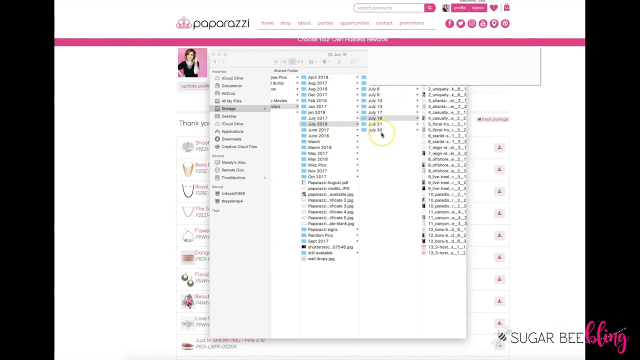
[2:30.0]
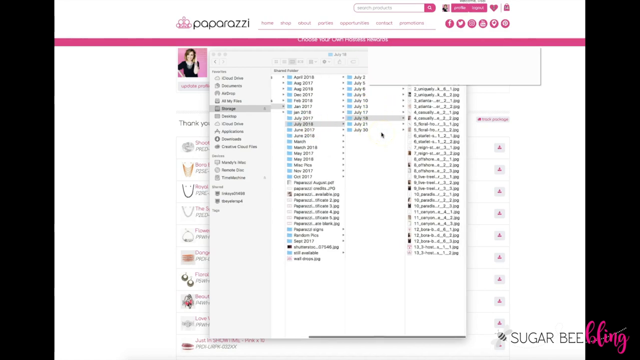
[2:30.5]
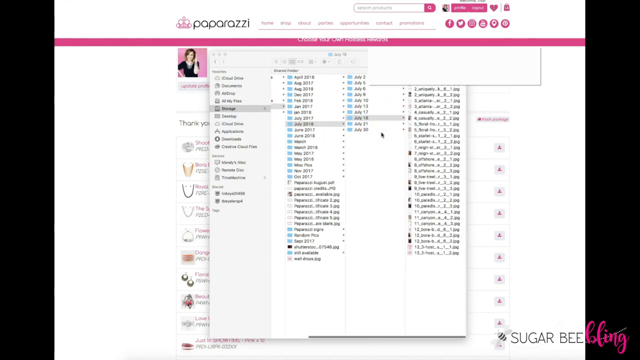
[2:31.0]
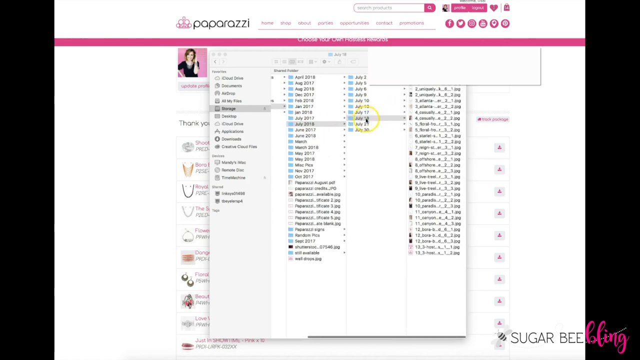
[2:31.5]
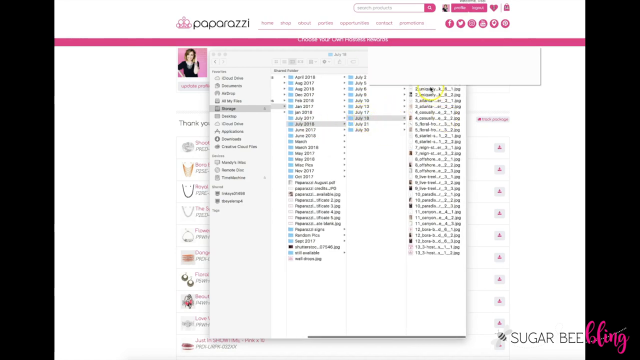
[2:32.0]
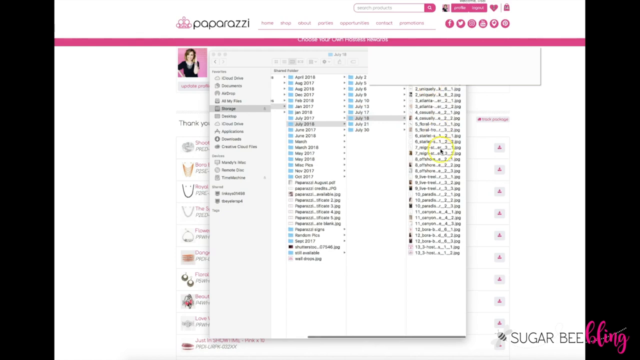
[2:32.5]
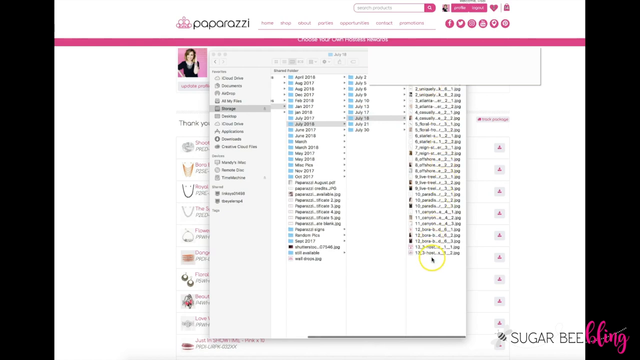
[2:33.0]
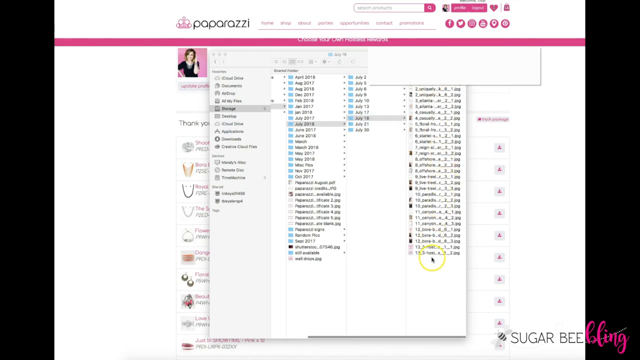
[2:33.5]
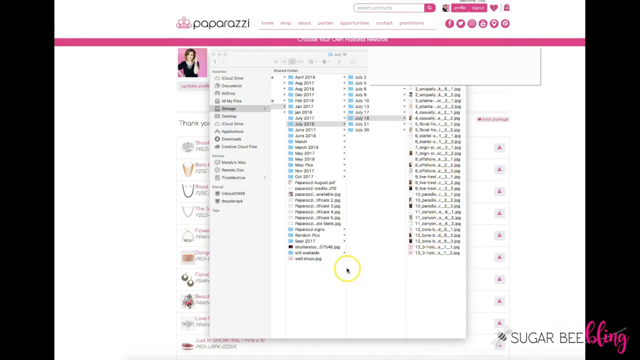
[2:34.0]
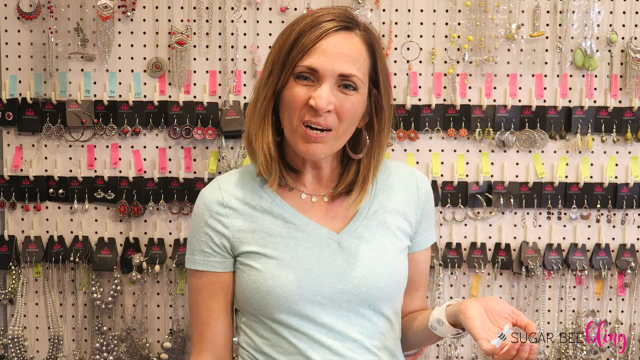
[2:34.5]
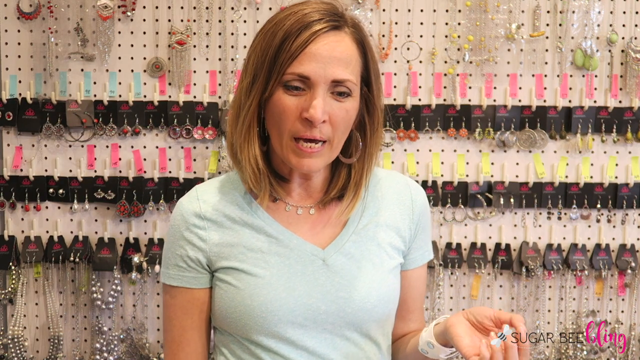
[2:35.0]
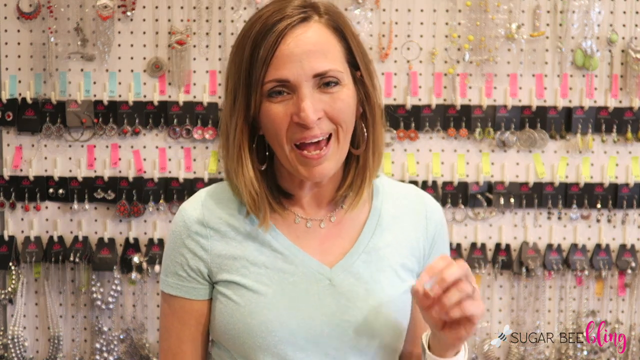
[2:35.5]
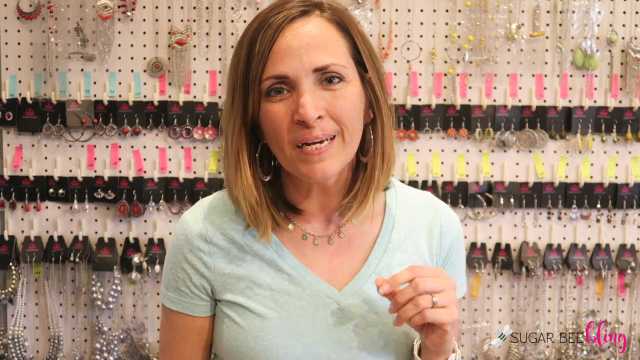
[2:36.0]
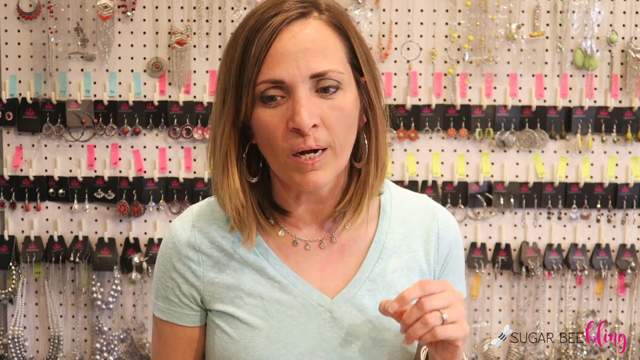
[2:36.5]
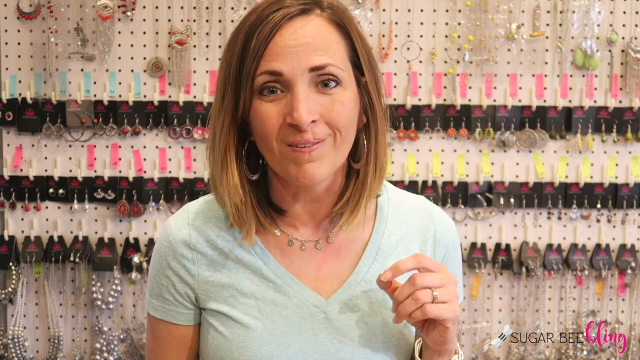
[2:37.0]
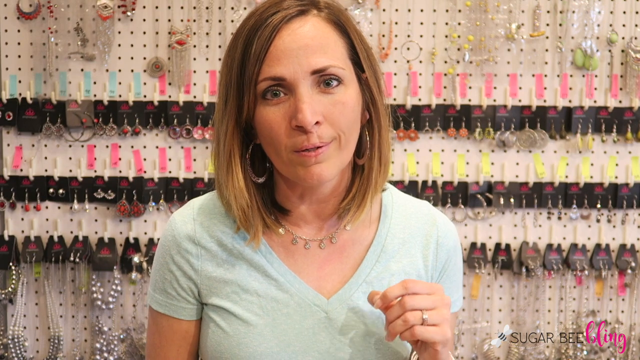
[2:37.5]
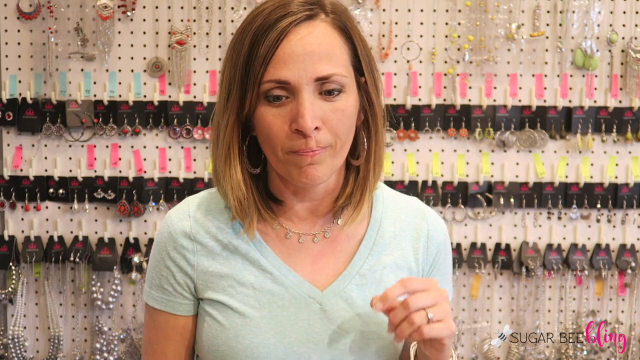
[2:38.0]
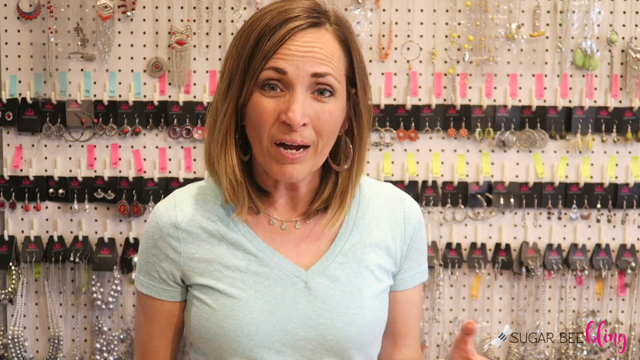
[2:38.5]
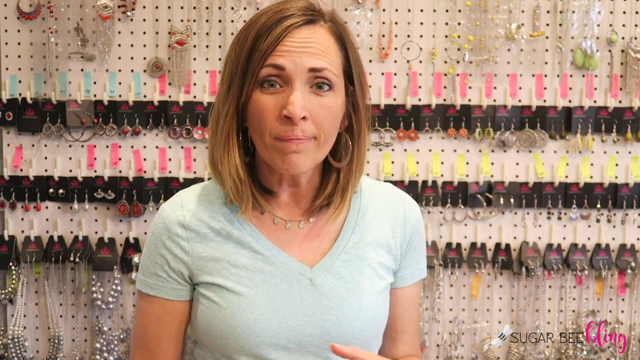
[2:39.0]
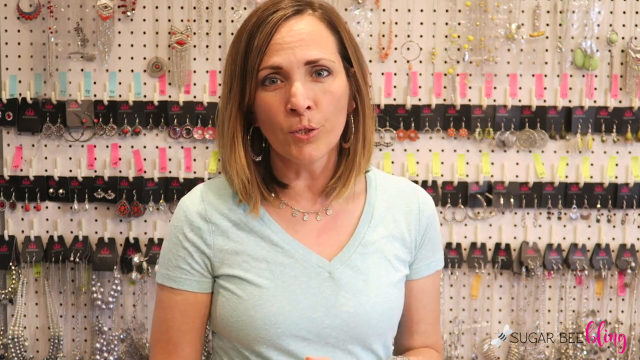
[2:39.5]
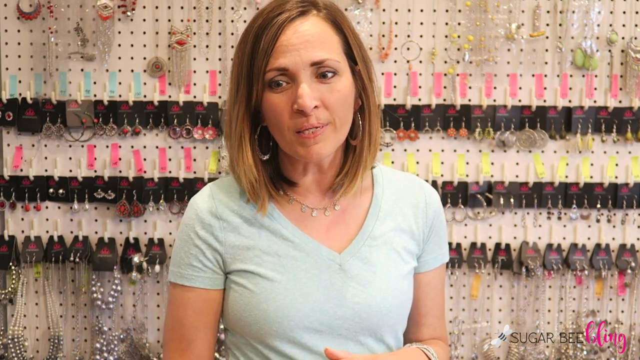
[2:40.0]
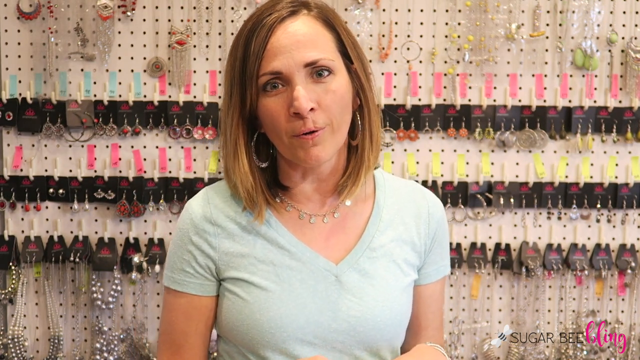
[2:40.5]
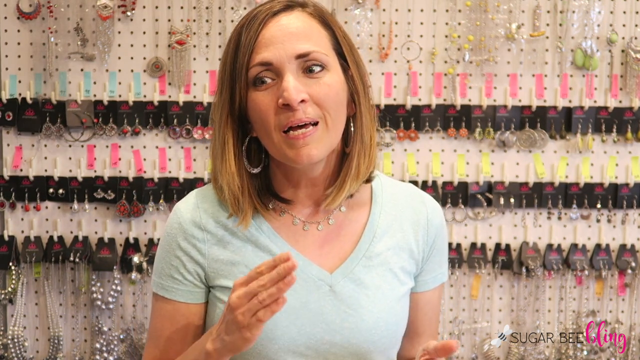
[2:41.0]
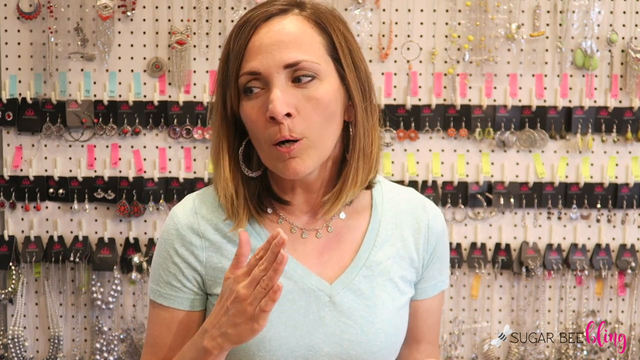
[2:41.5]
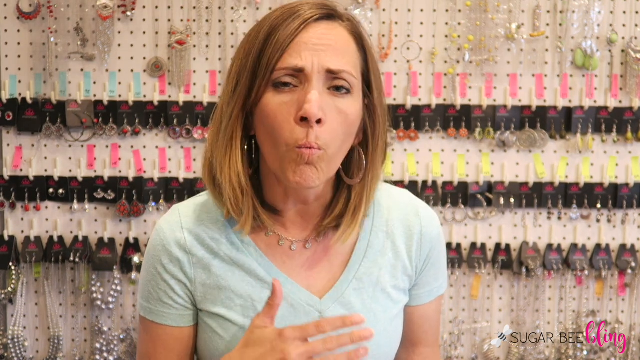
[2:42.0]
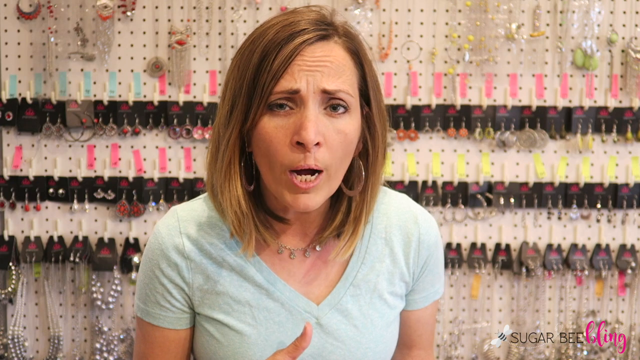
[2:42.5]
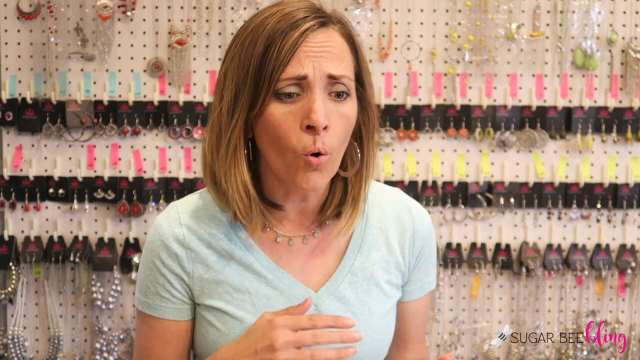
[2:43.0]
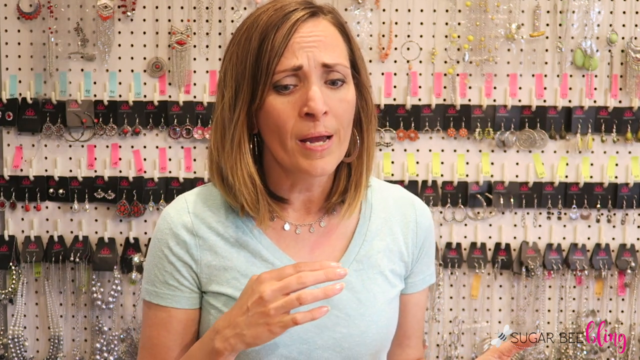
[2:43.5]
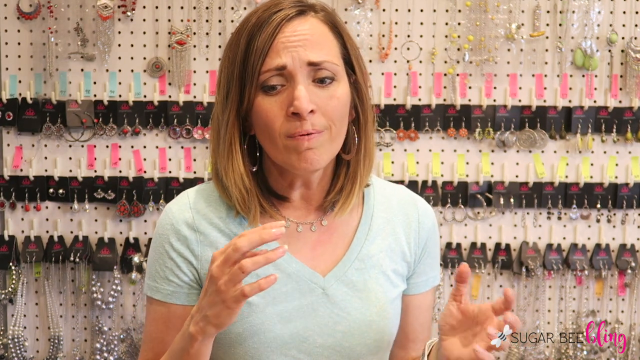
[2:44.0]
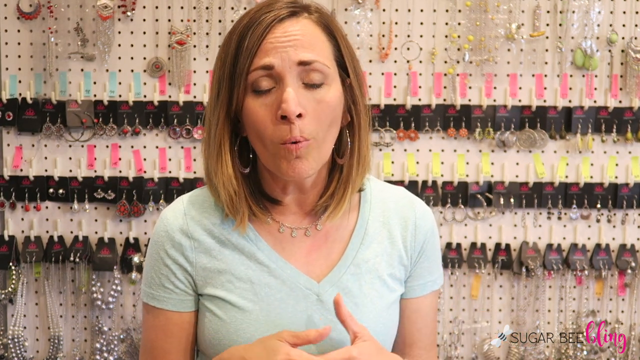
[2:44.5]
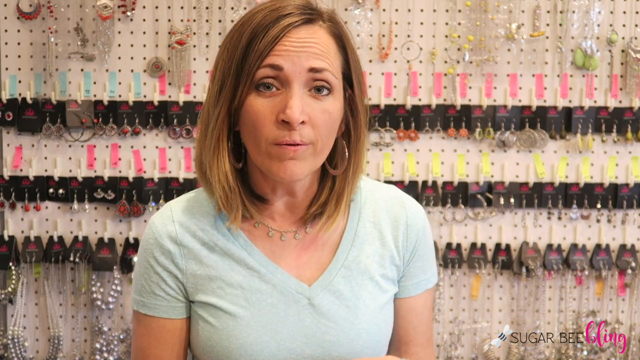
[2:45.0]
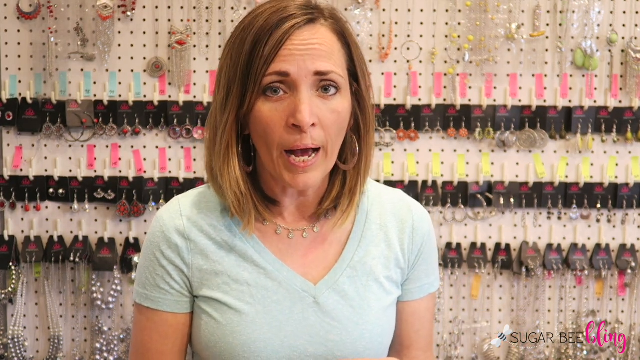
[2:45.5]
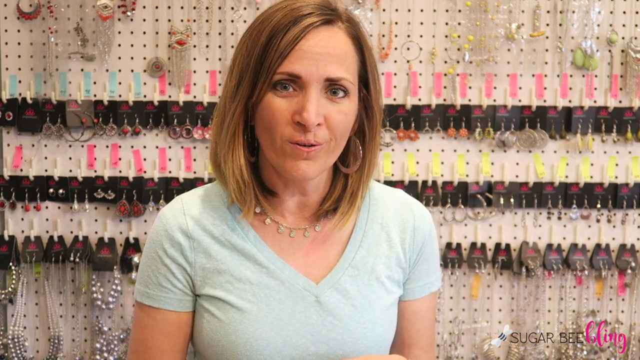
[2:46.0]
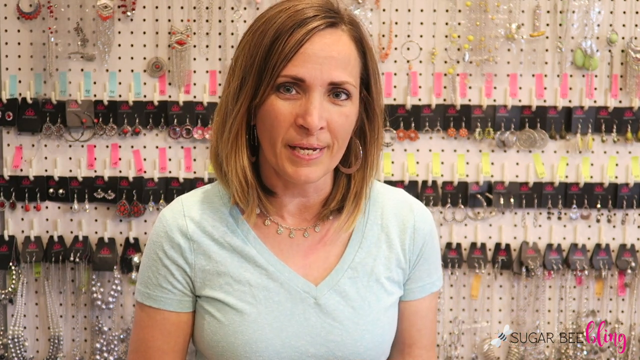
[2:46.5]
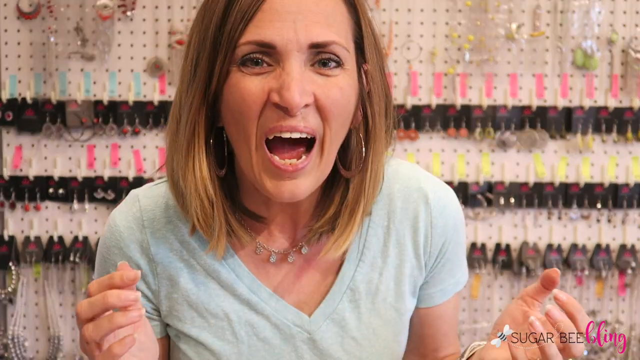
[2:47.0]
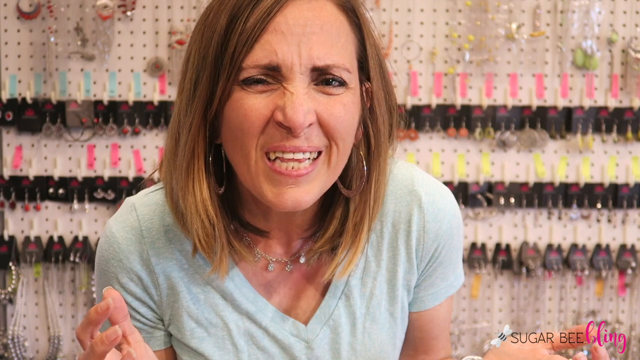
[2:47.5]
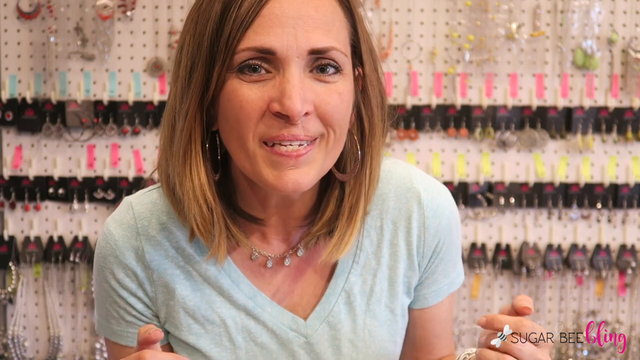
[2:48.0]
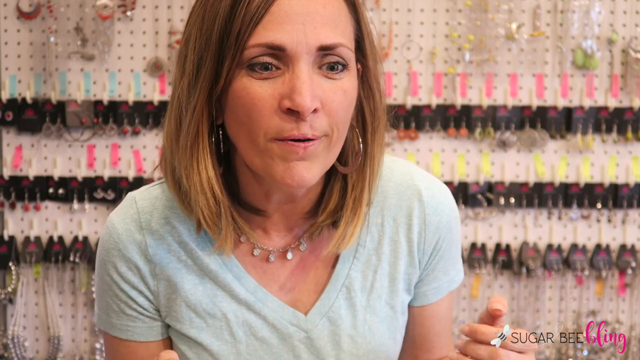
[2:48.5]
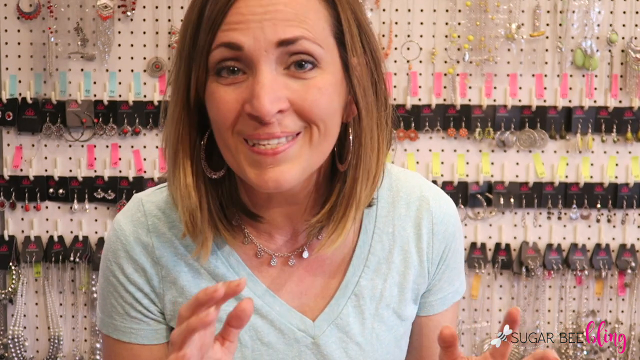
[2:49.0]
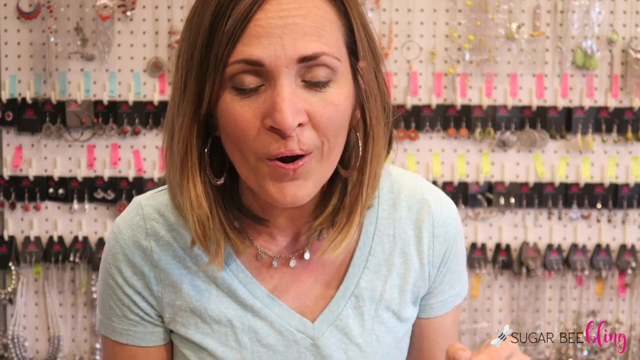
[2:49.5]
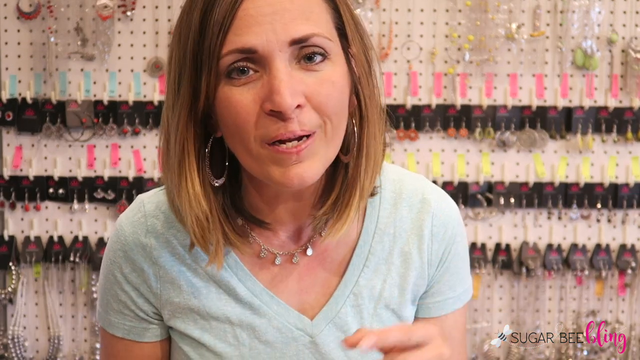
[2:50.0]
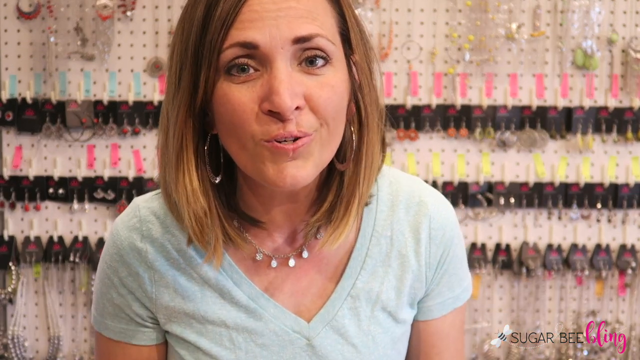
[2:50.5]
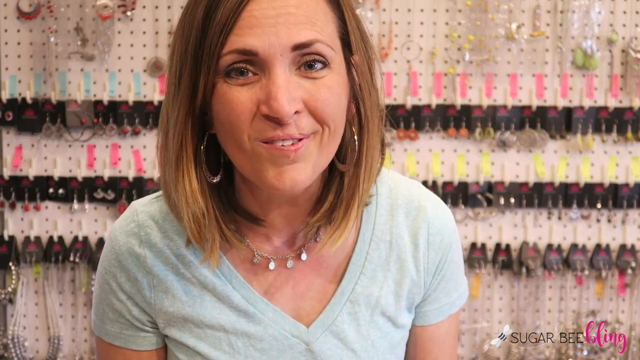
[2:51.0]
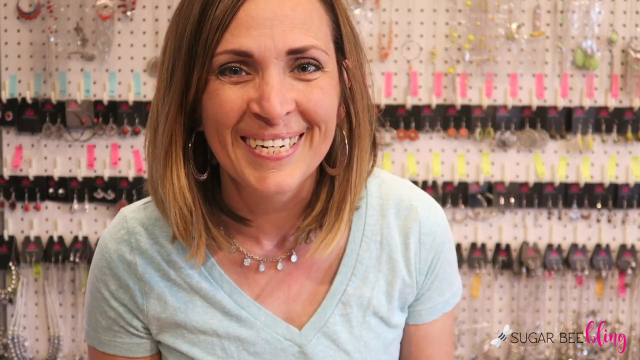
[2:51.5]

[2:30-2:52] A file manager on an Apple MacBook or computer desktop shows the folder "July 2018", a folder "July 18", and the photos downloaded from the website. The woman then appears again, with many pieces of jewelry behind her, talking about the Paparazzi website. The shot zooms in on her face several times as she gestures with her hands and shows her expressions. She apparently wants to sell her jewelry on the Paparazzi website.